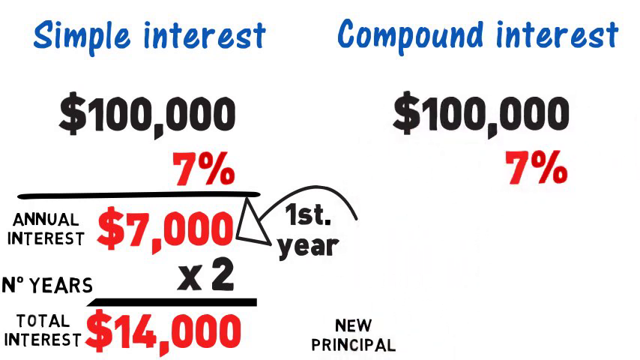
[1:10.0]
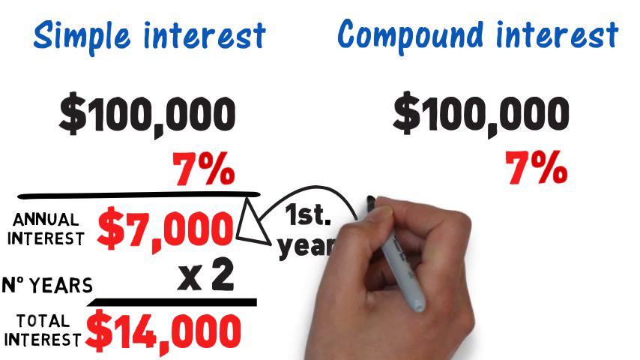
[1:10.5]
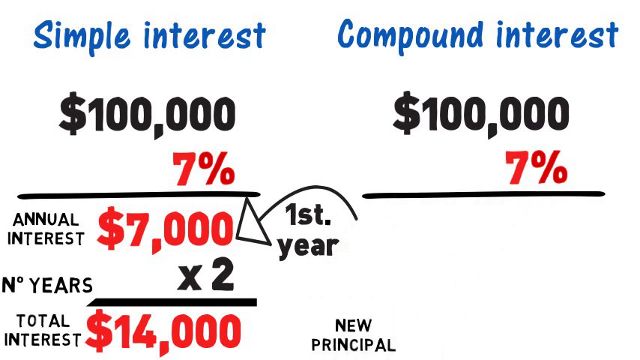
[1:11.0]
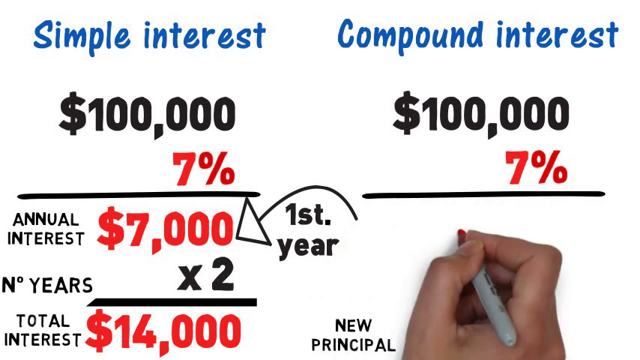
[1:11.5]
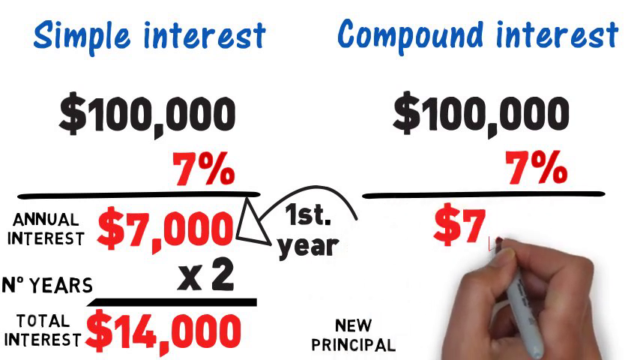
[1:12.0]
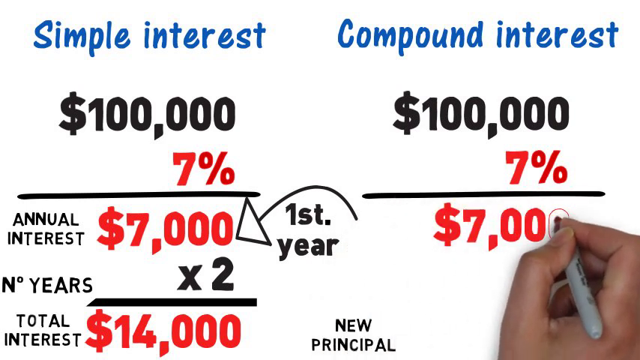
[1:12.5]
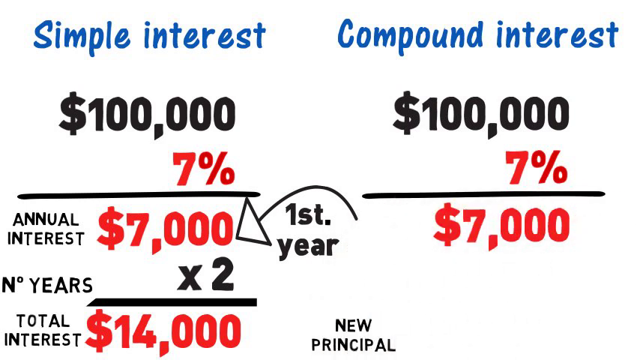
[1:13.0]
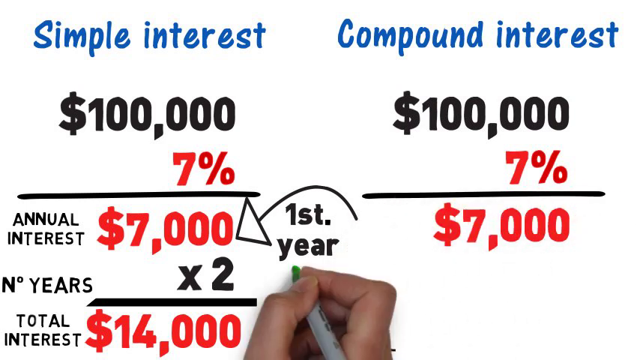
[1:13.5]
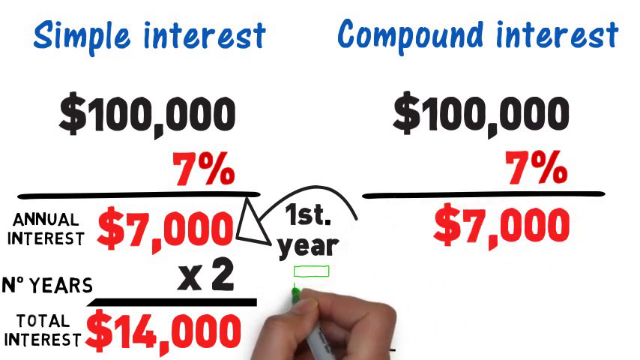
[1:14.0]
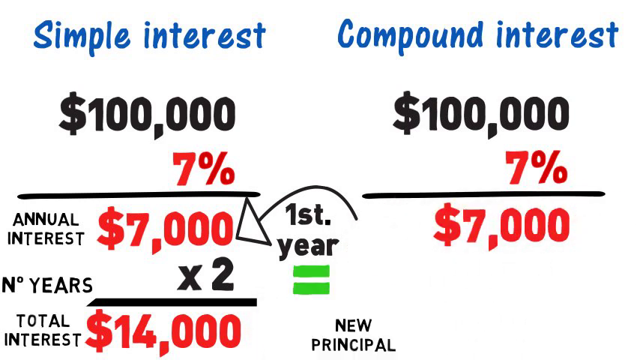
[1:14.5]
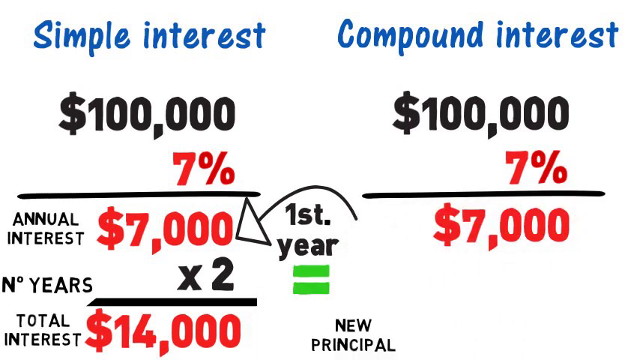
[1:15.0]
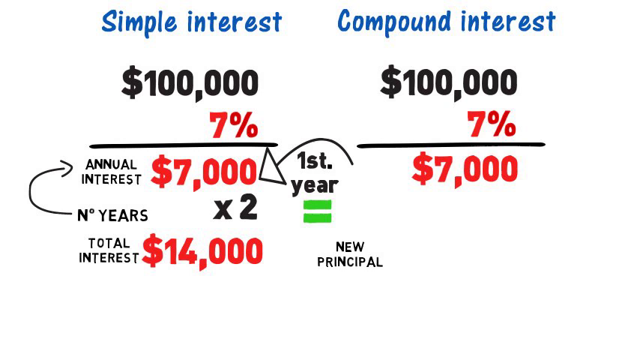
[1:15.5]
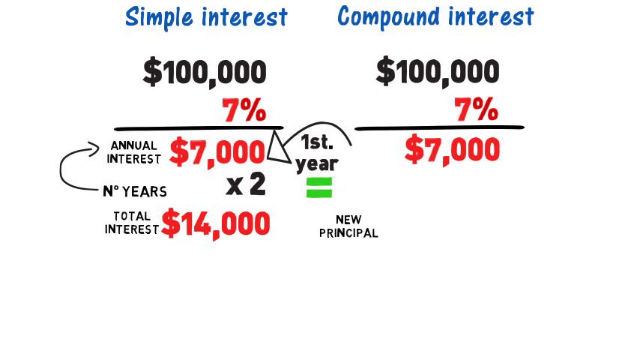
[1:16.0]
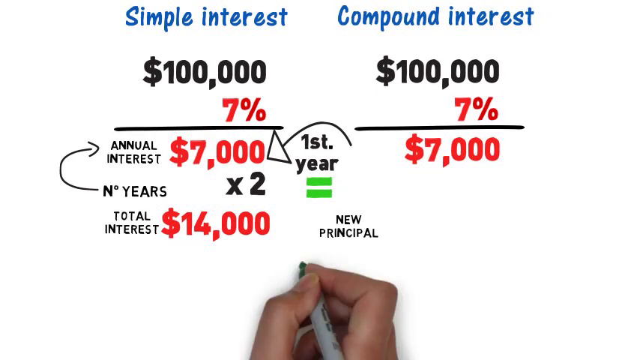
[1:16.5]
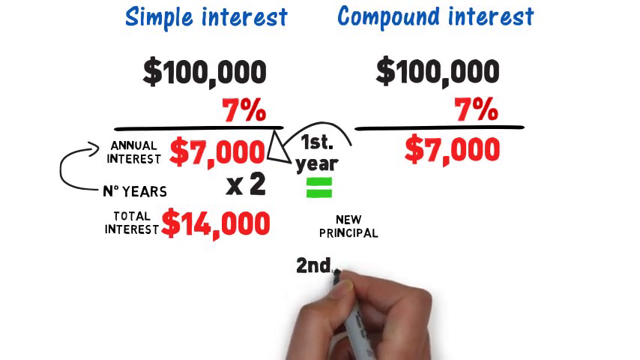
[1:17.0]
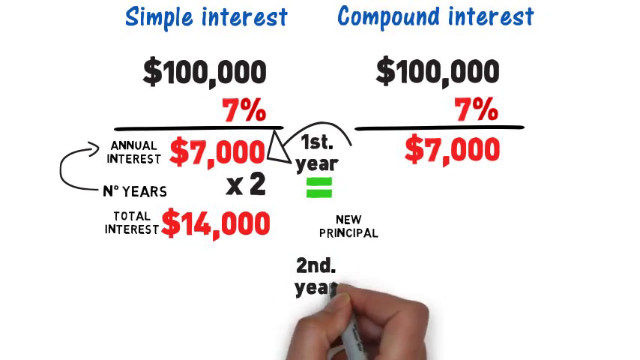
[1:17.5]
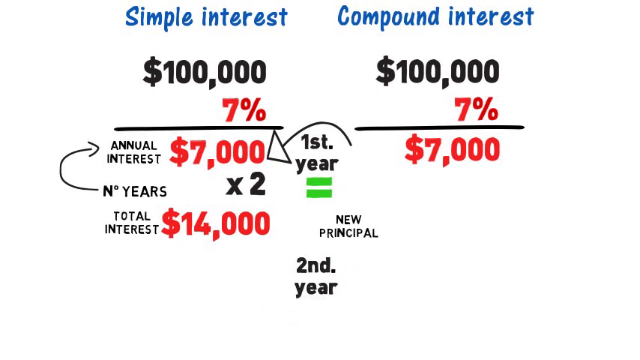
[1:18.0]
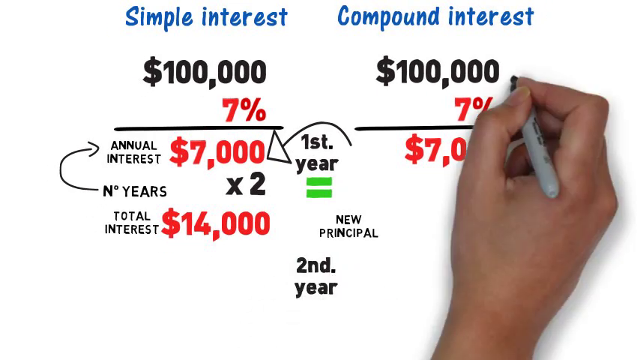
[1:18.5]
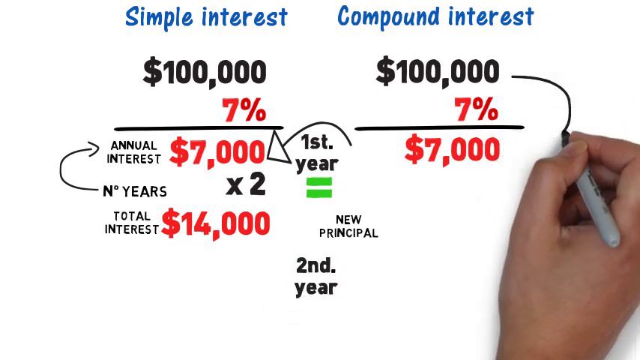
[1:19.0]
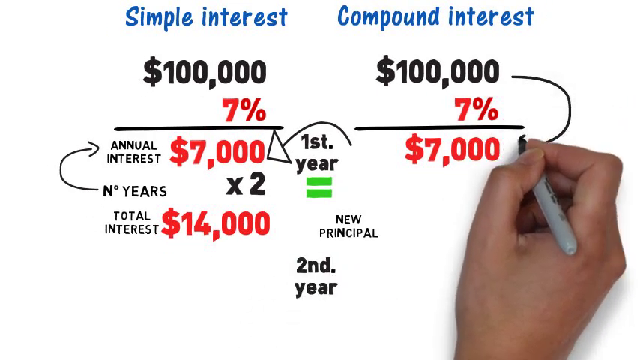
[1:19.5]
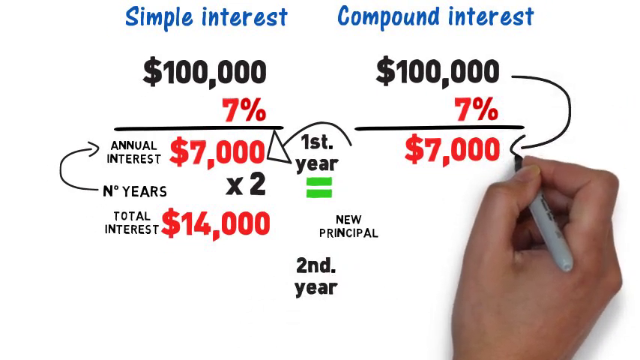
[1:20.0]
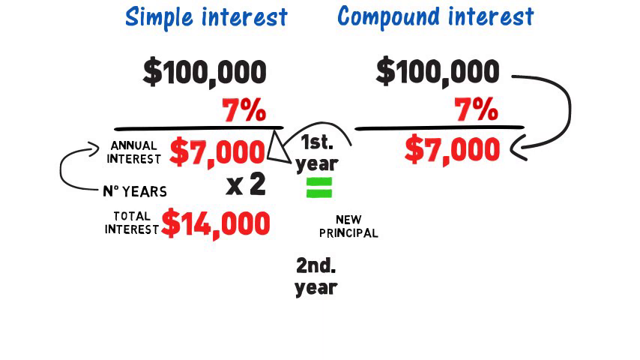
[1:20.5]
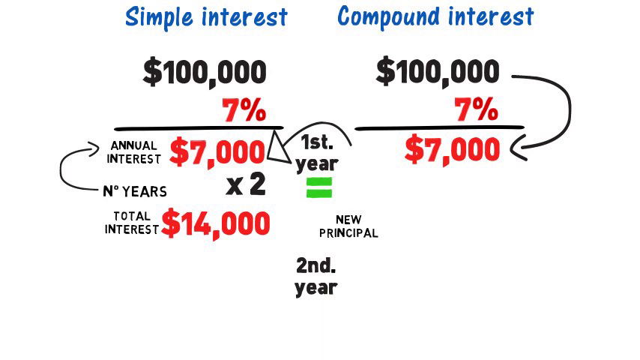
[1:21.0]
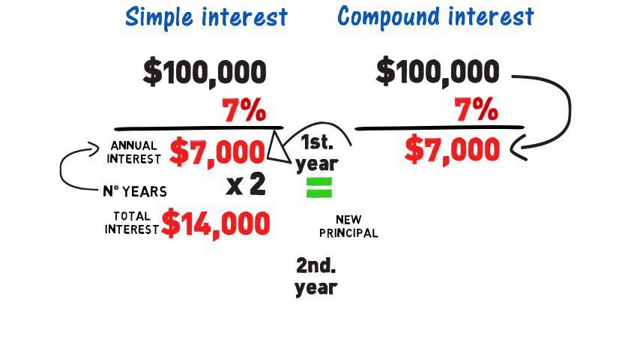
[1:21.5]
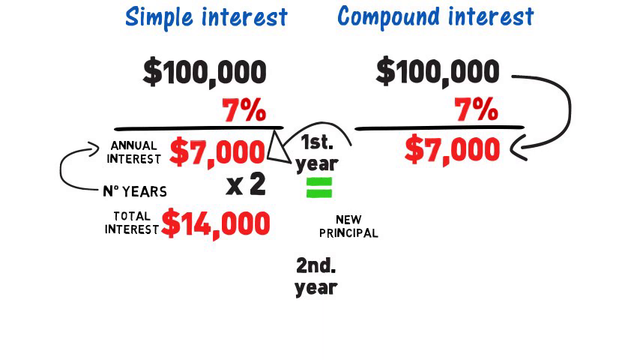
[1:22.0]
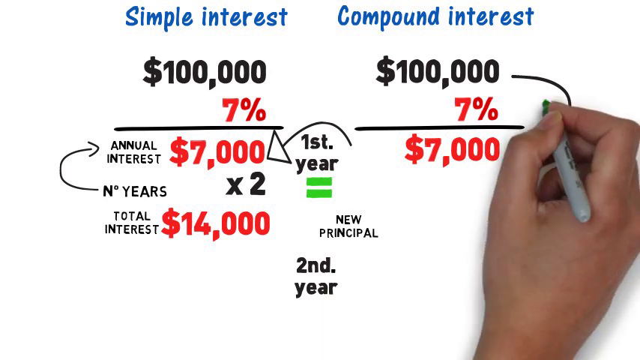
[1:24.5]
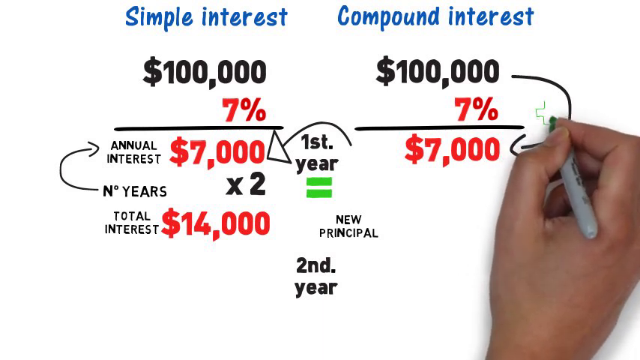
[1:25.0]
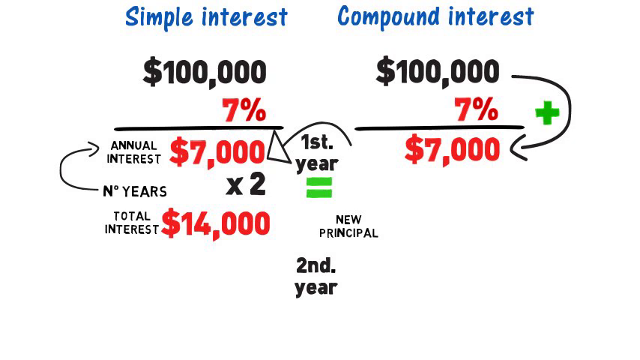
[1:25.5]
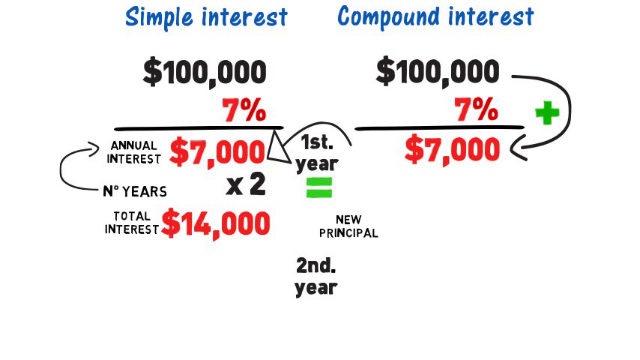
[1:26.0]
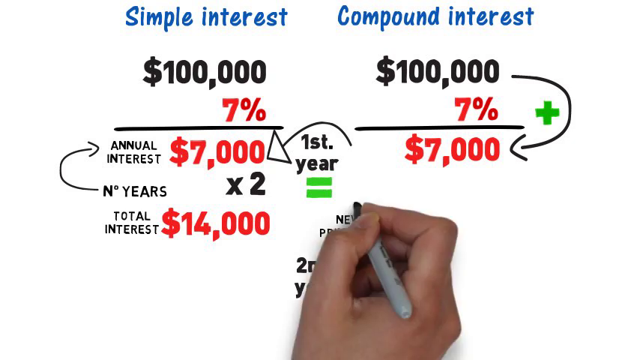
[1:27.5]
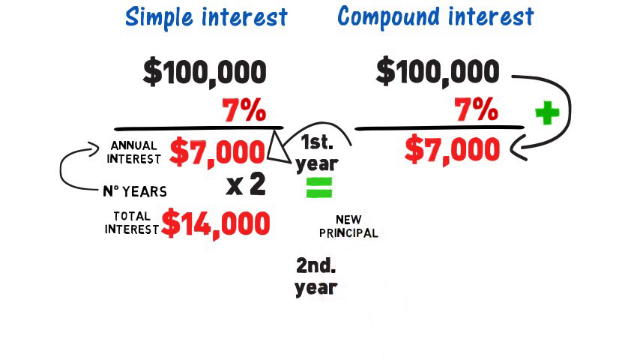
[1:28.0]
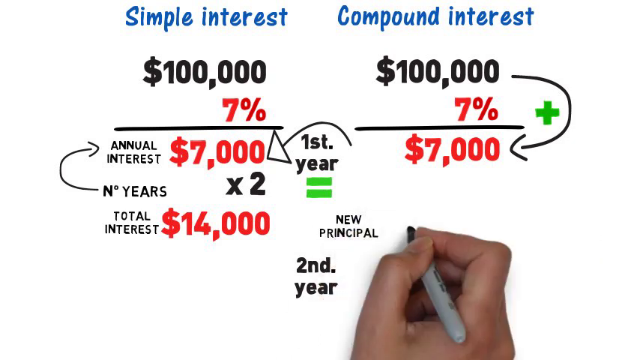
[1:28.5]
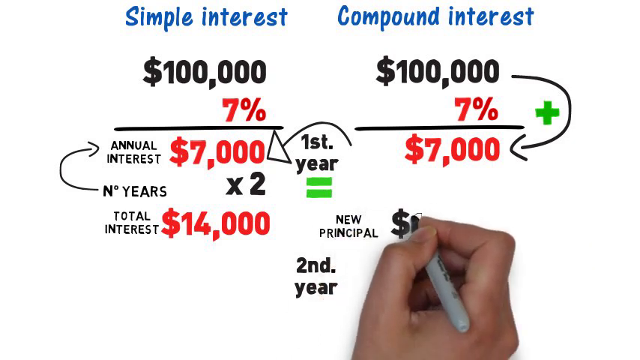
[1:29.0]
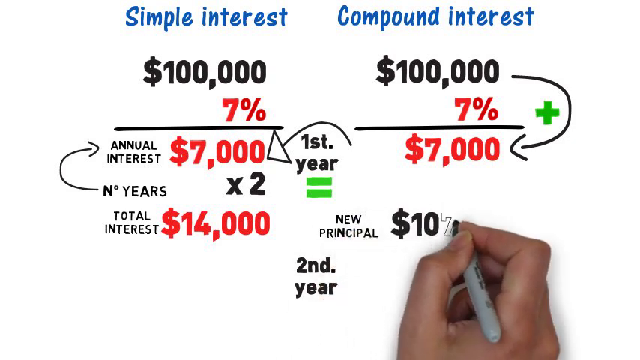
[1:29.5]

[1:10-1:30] The multiplication under "Compound Interest" is finished: $100,000 times 7% equals $7,000, the same as the simple interest. The camera seems to move away a bit to show both columns, simple interest and compound interest. The hand draws an arrow pointing from $100,000 to $7,000 on the compound interest side, and a small green cross to the left of this arrow. It then draws an equals sign between the two columns, just below where it indicates the first year. Below, the text "second year" appears, and the hand starts writing an amount as the shot cuts.